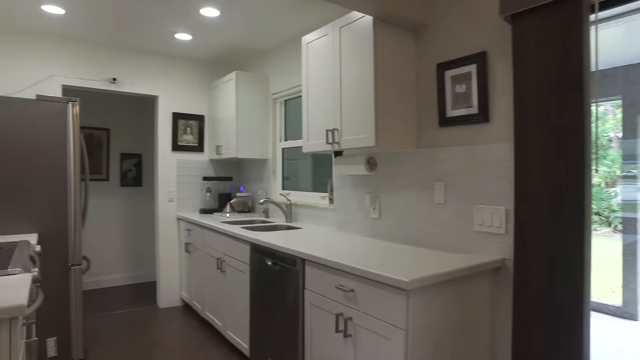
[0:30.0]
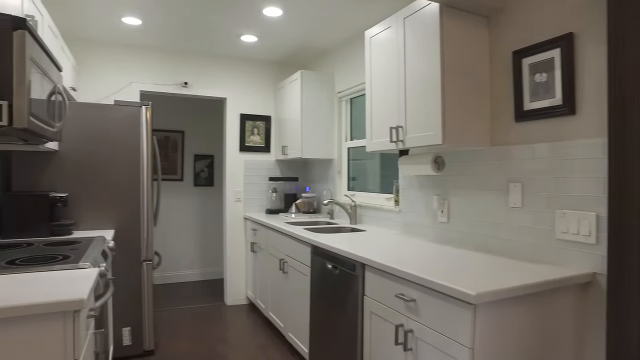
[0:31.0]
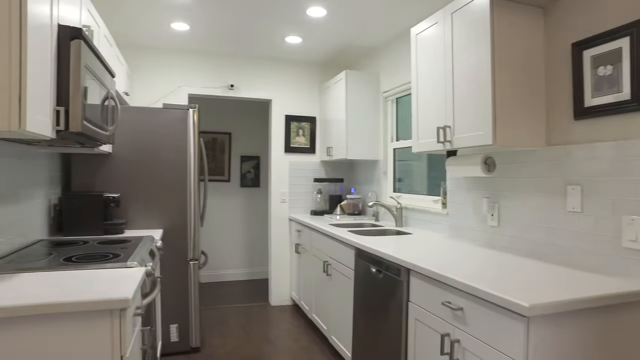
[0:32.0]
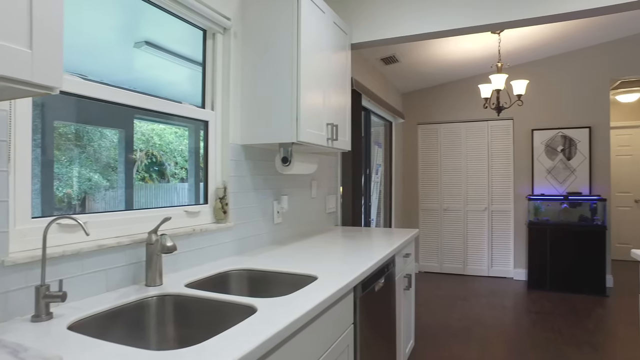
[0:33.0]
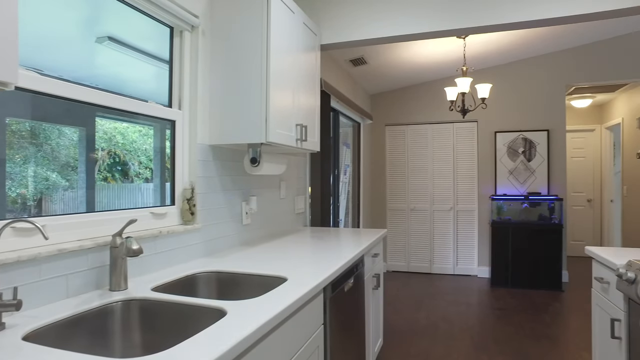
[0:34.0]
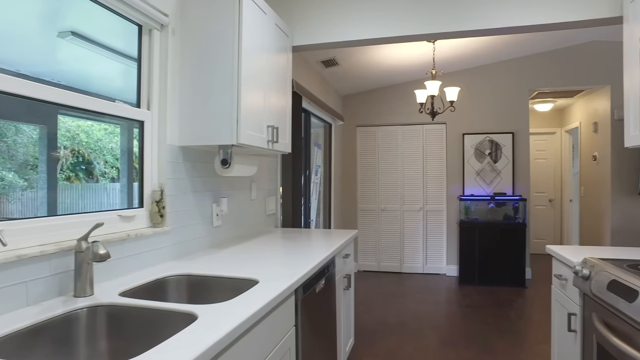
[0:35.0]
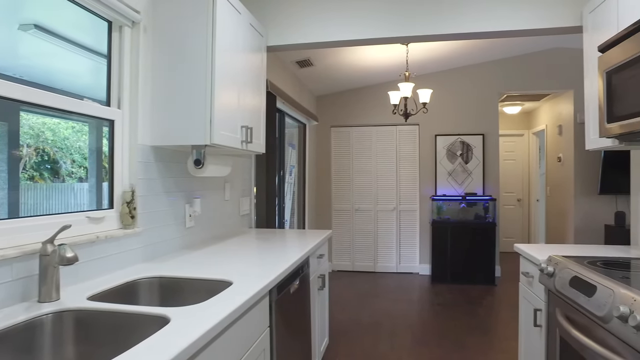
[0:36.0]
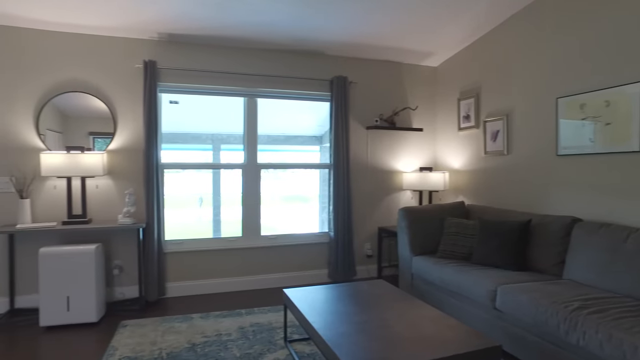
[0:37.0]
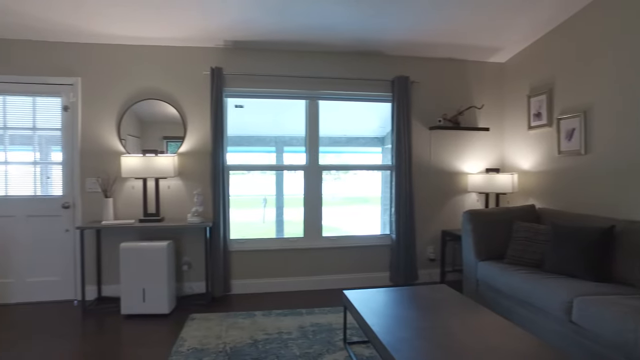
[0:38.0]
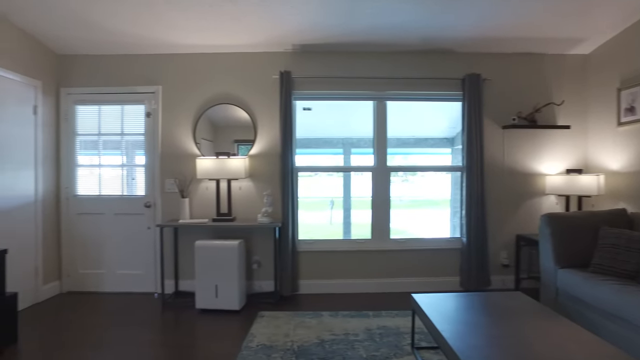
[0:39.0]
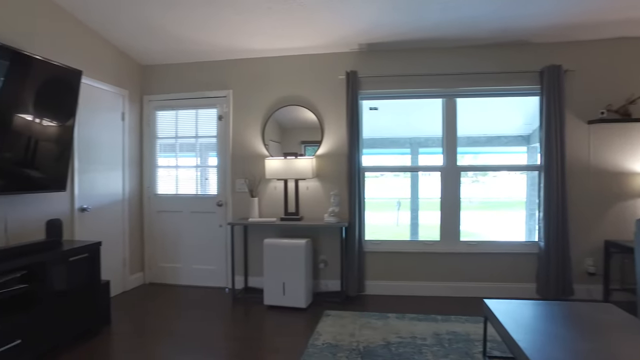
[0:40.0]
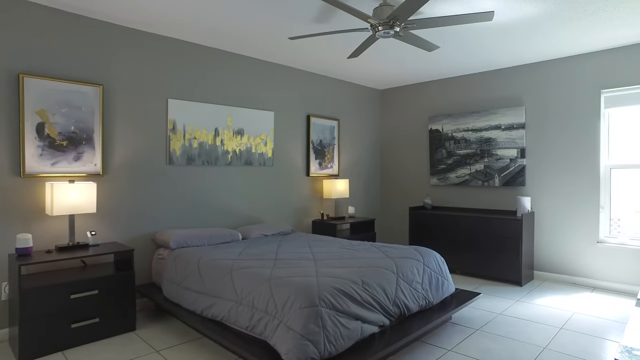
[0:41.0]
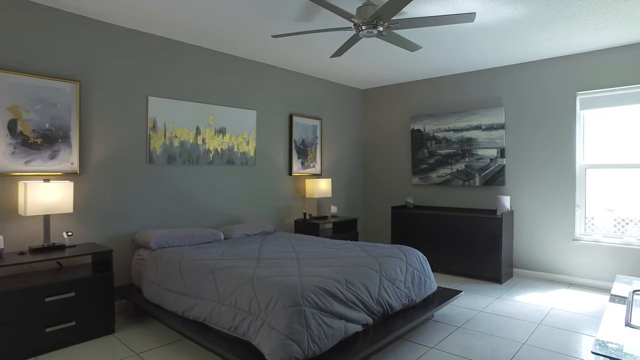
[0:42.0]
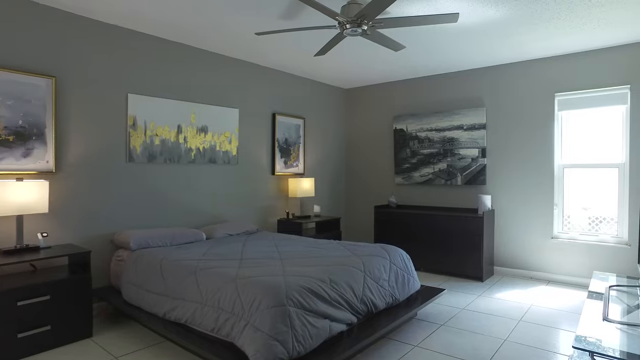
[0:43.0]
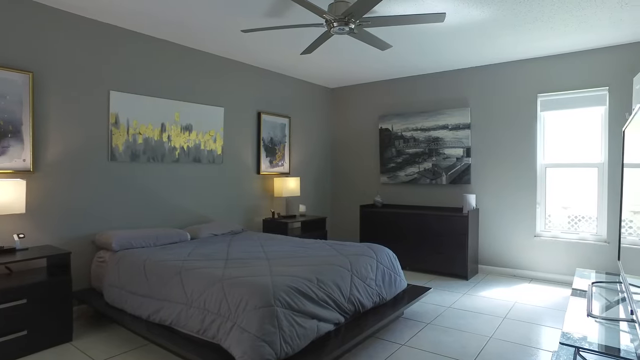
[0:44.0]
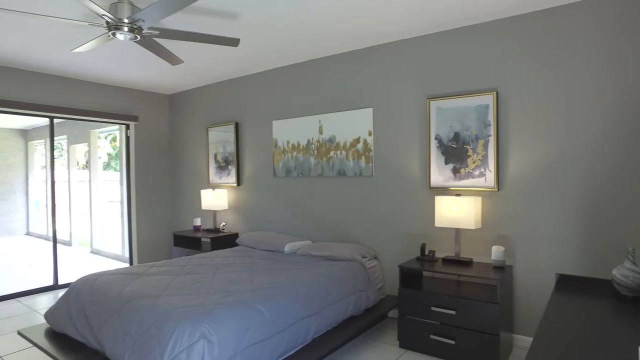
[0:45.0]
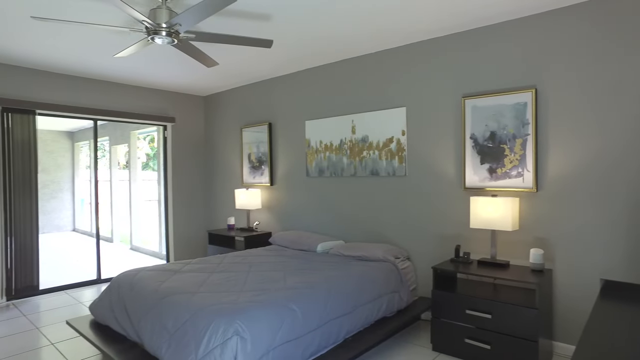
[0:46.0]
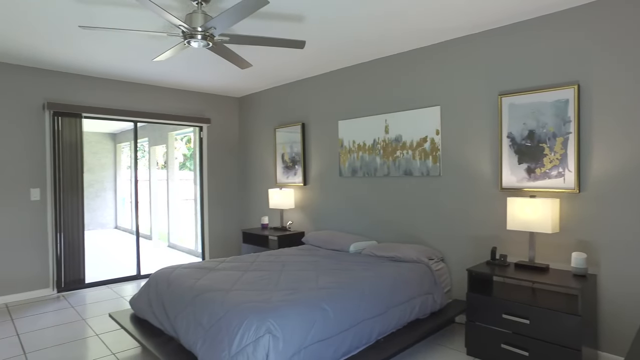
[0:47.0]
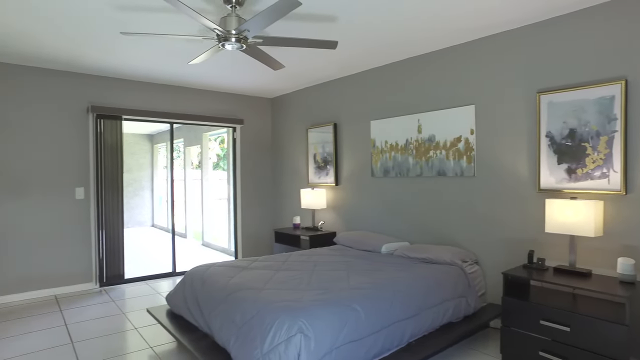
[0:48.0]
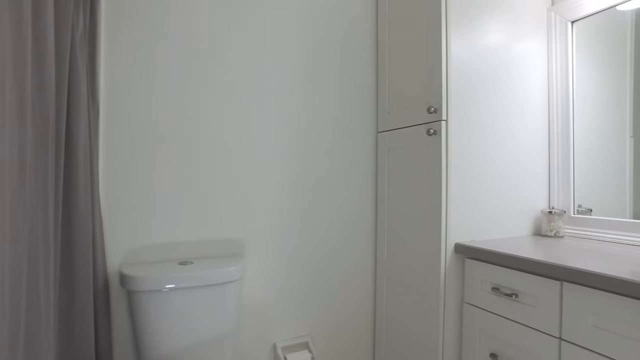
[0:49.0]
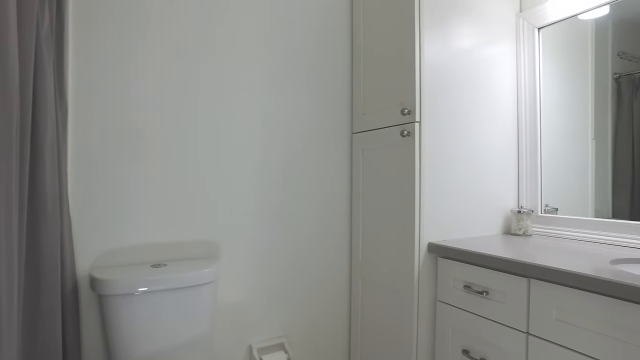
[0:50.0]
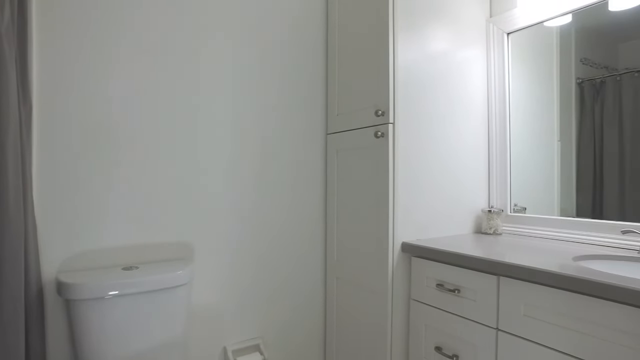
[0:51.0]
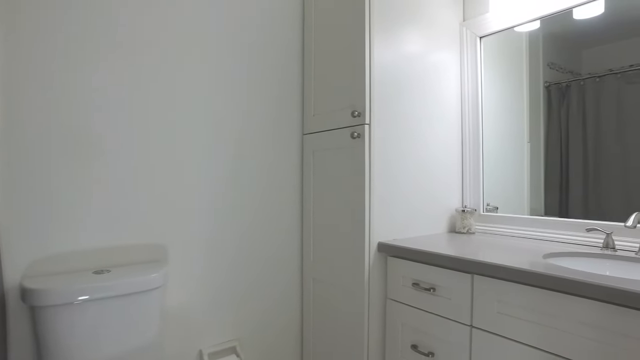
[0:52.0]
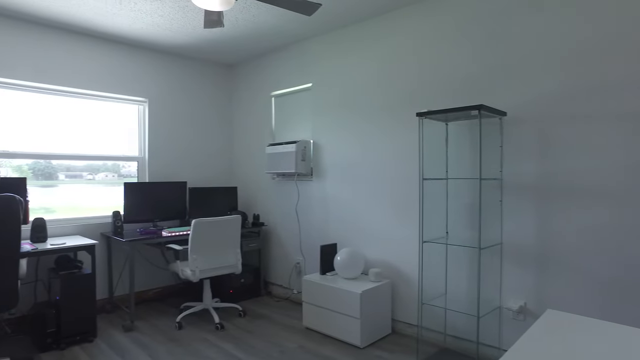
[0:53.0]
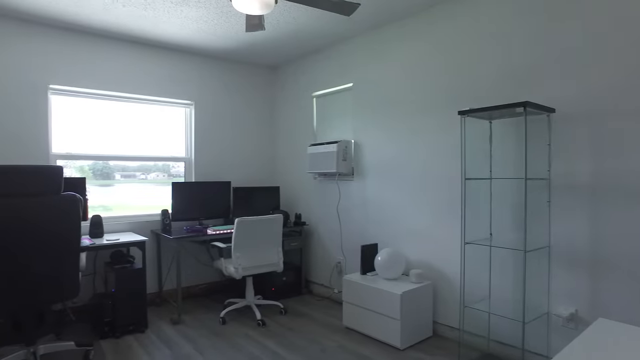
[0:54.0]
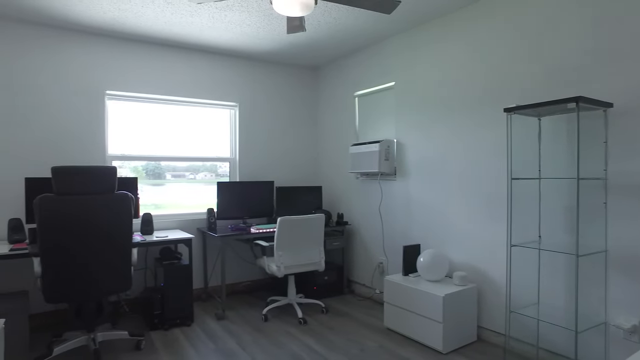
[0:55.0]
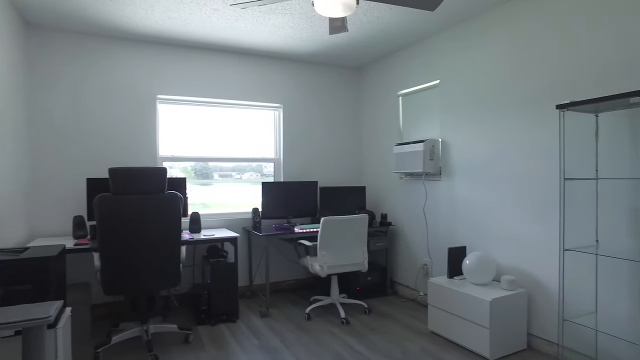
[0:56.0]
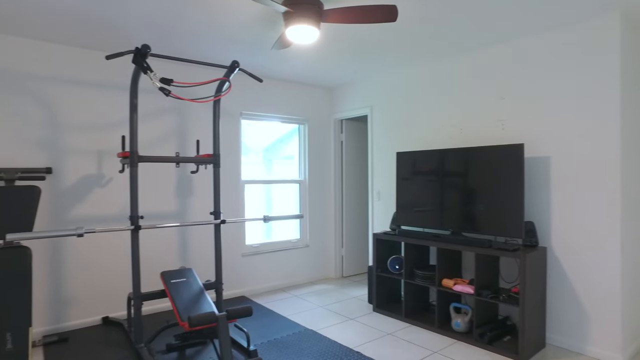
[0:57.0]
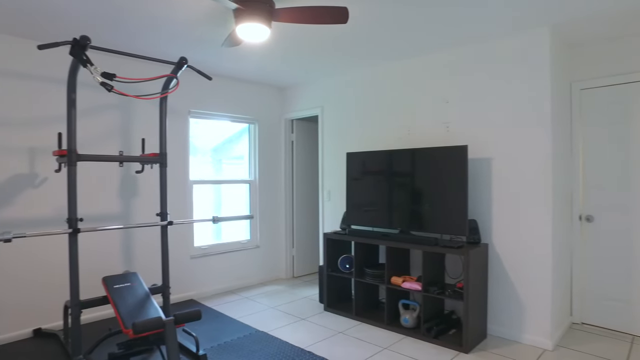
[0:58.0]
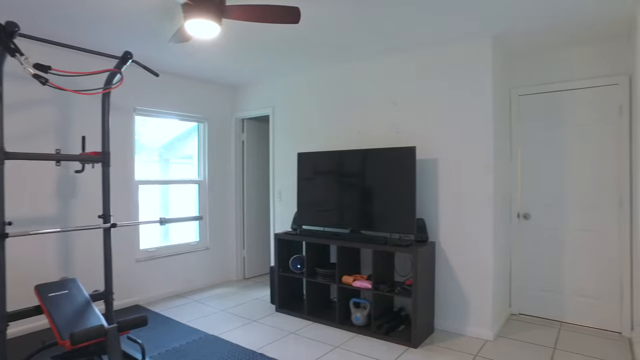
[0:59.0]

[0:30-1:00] The home is shown inside and out, apparently by drone, as part of an ad for the service. The kitchen has a walk-through from the living area into a hallway, an oven, a double sink and a microwave oven. The spacious living room has a window on the door, a large window and an entertainment center. A large bedroom also has a large window and a ceiling fan. The master bedroom has sliding doors that lead outside. There is a bathroom, a designated office space right next to a nice-sized window, and an entertainment exercise area, also with a nice-sized window.